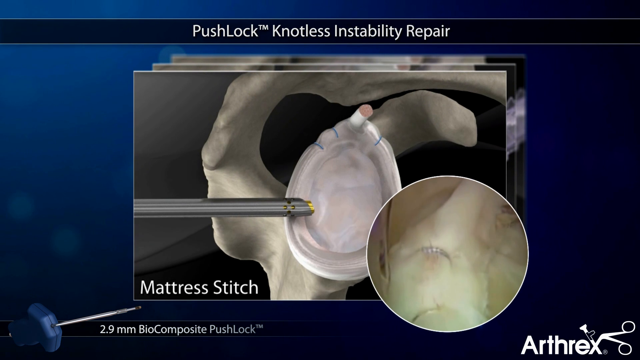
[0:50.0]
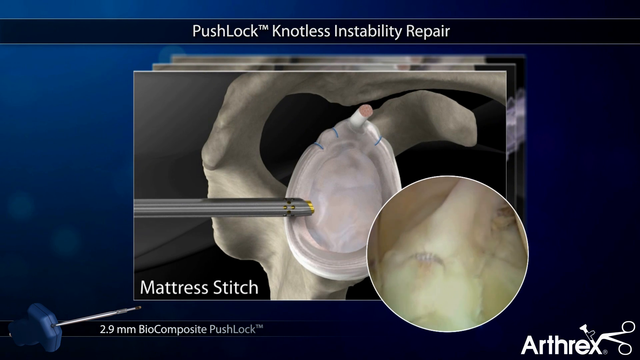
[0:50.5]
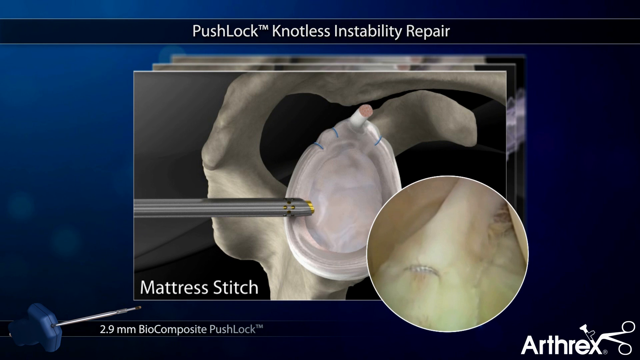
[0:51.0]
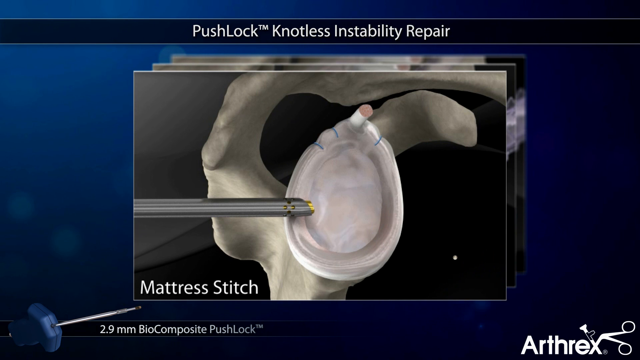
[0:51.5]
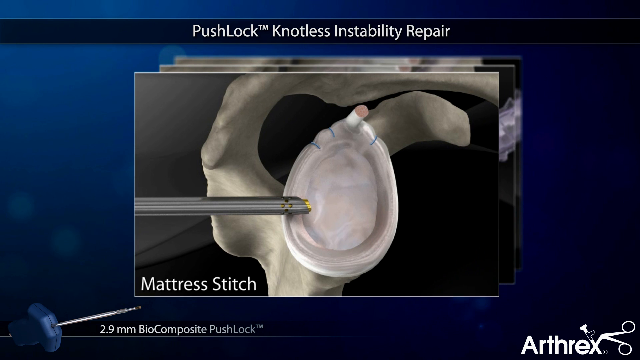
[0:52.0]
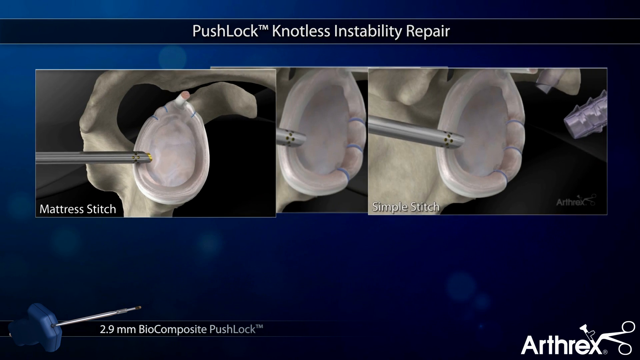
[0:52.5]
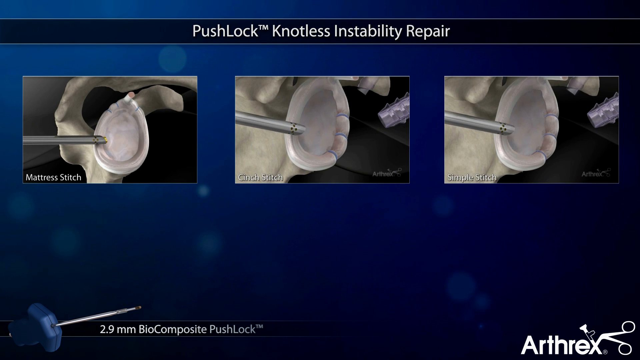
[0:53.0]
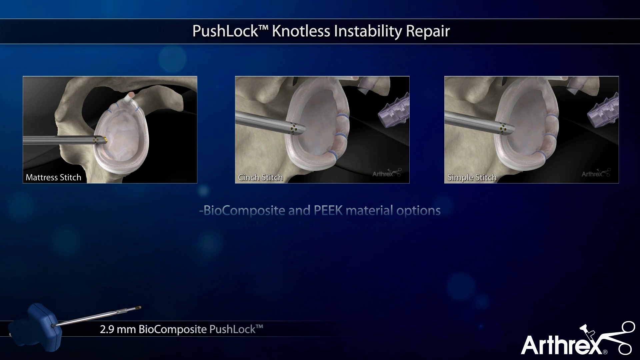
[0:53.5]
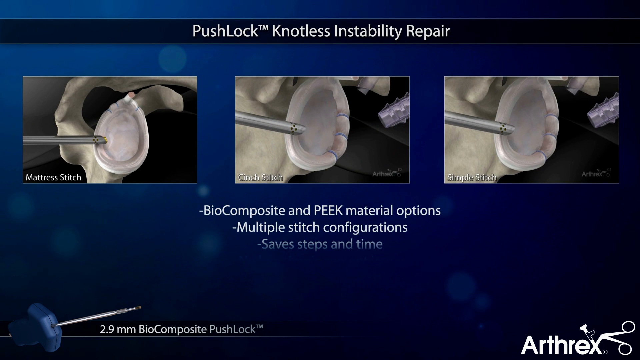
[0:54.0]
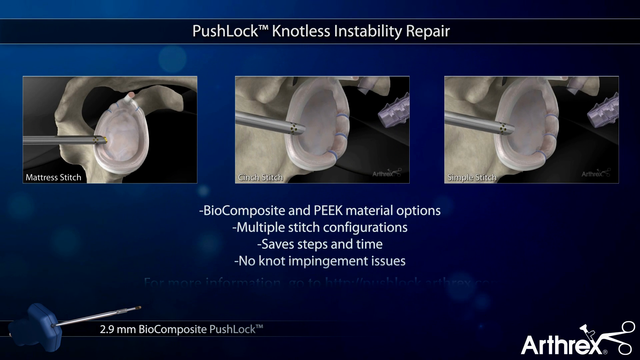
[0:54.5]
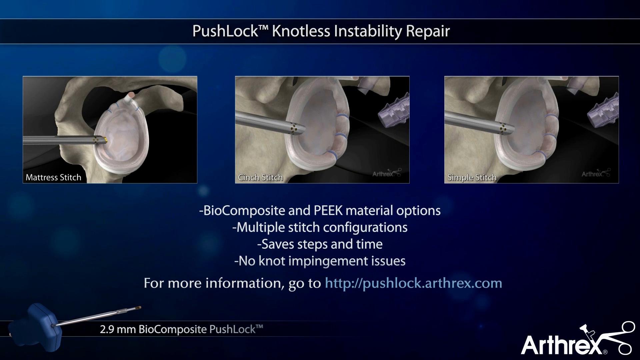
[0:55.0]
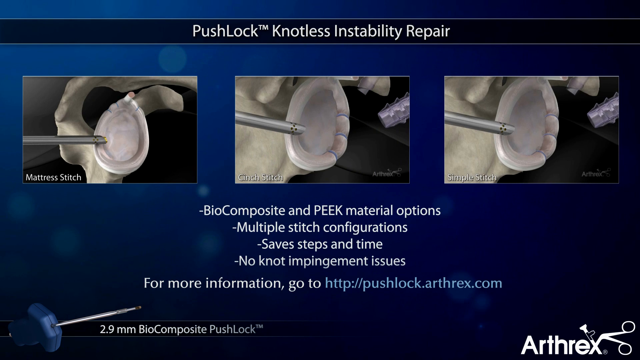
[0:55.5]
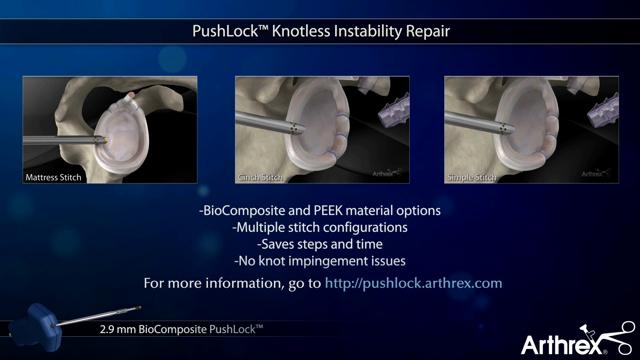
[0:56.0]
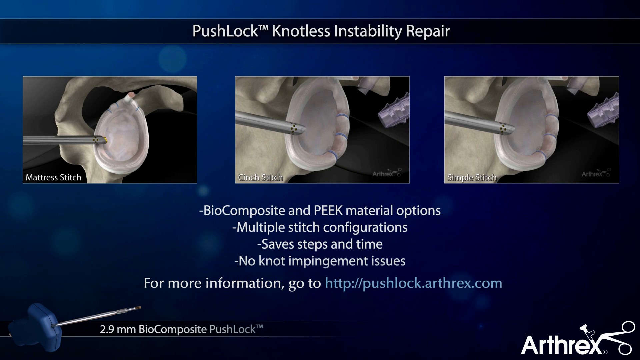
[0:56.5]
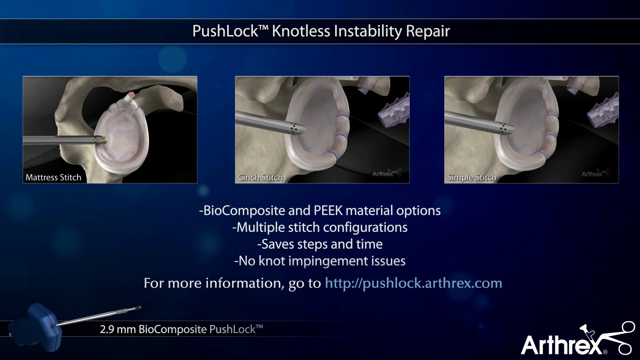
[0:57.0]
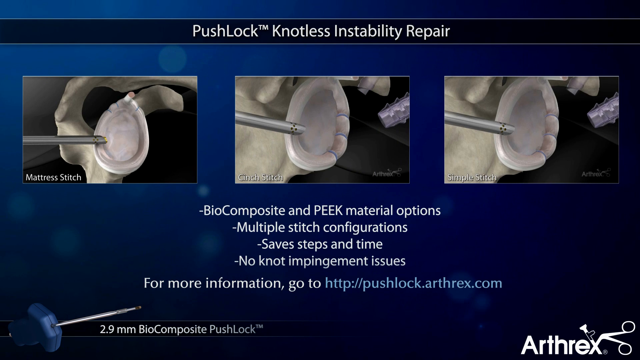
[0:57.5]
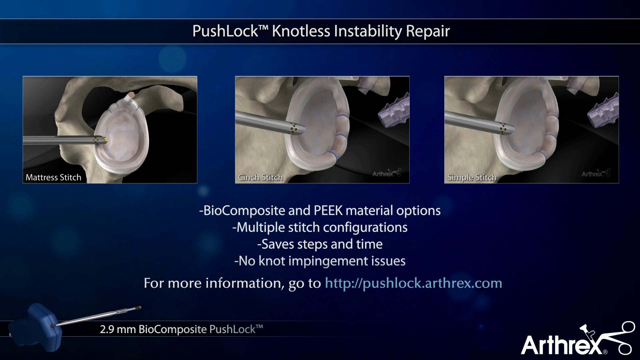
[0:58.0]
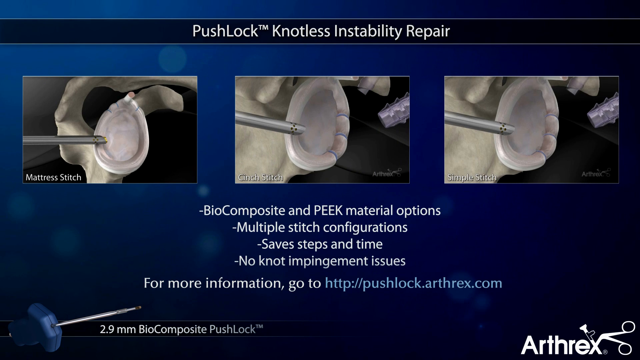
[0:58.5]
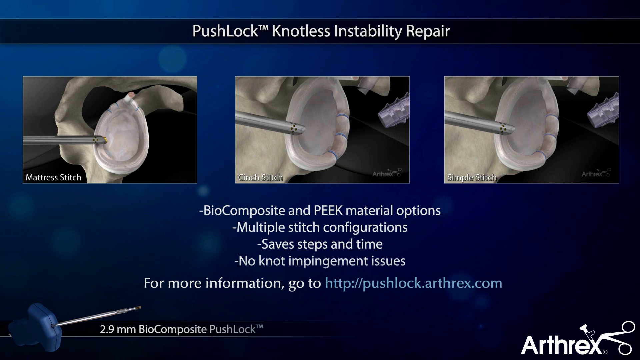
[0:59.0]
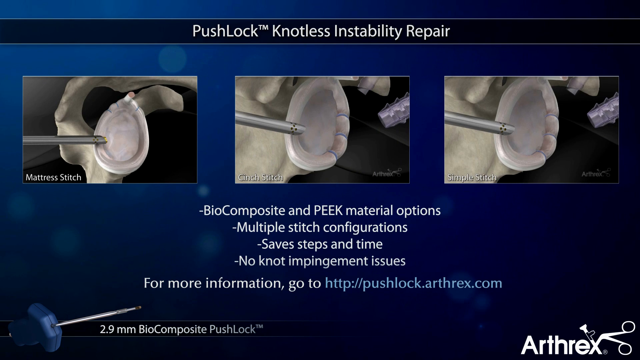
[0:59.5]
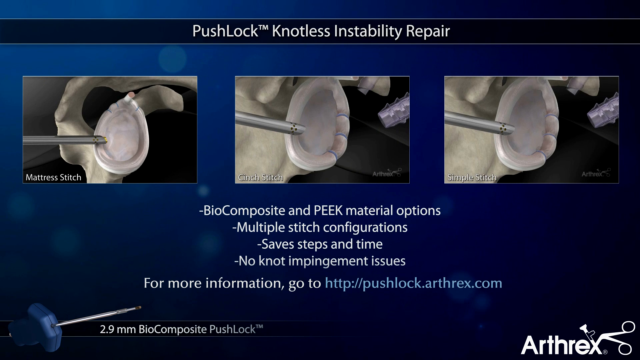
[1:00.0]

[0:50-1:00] The slide continues, showing three separate pictures of what looks like the silicone item with three stitches in it near a bulb. It is titled "PushLockTM Knotless Instability Repair" and lists the following information: "biocomposite and peak material options, multiple stitch configuration, save steps and times, no knot impingement issues." A website for Arthrex is given for information. The background is dark blue, with a black stripe at the top carrying "PushLockTM Knotless Instability Repair" in white; all the other lettering is also white.